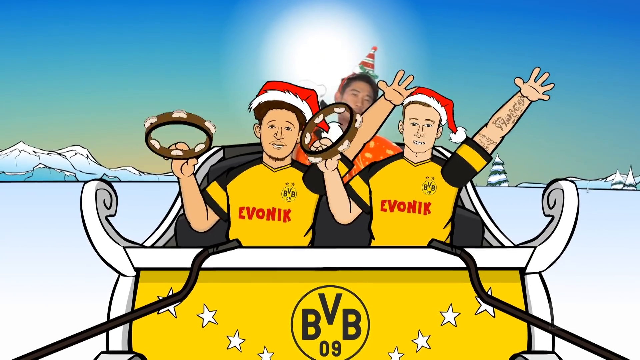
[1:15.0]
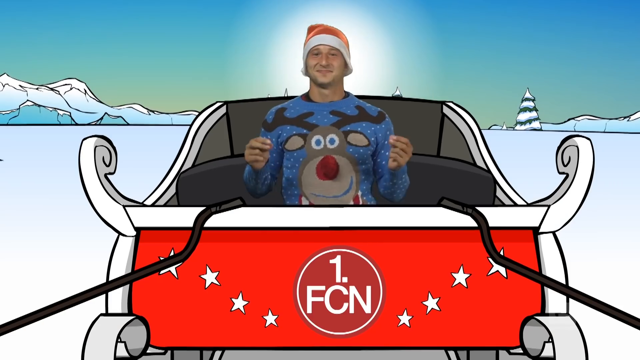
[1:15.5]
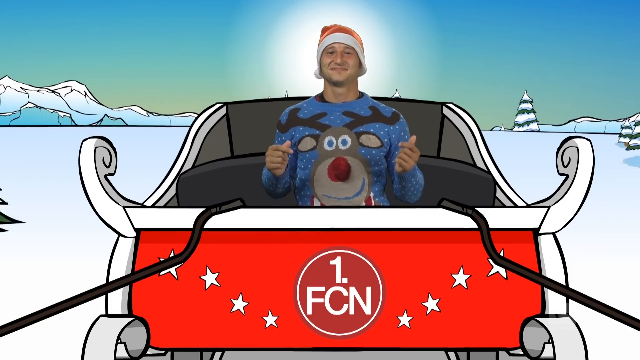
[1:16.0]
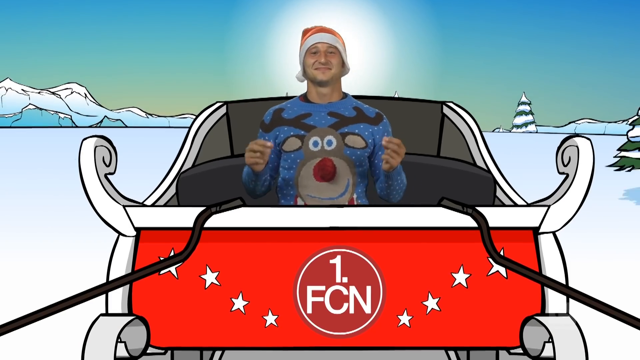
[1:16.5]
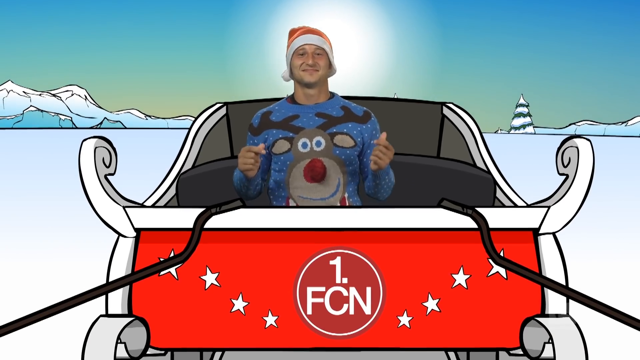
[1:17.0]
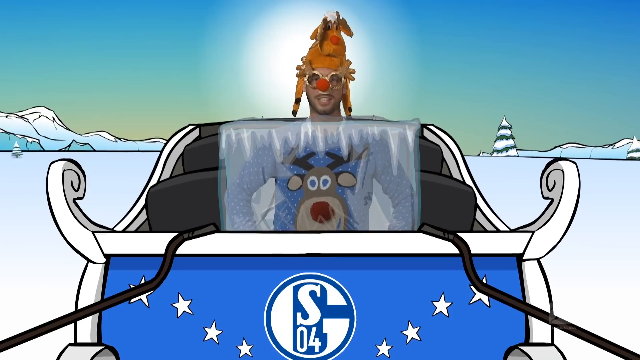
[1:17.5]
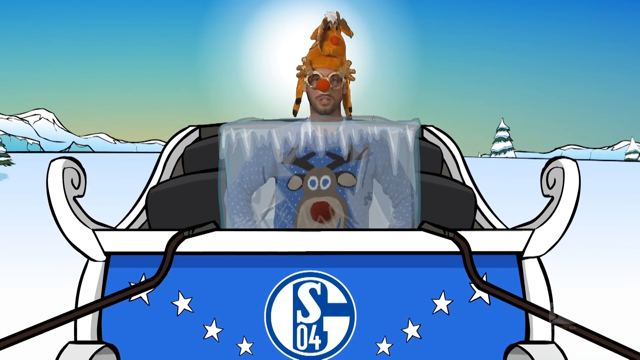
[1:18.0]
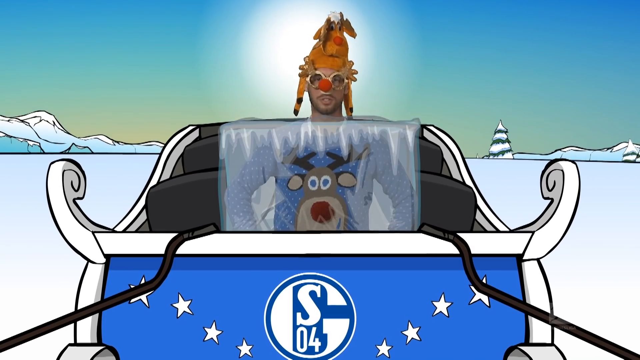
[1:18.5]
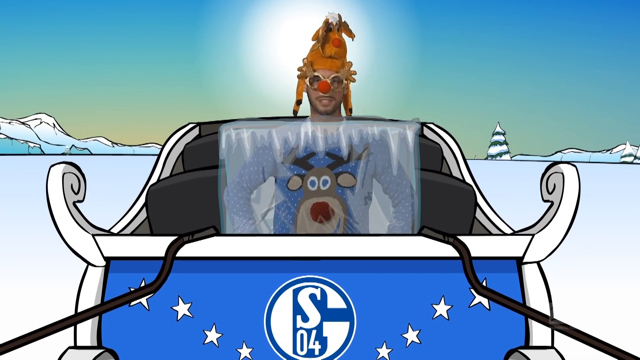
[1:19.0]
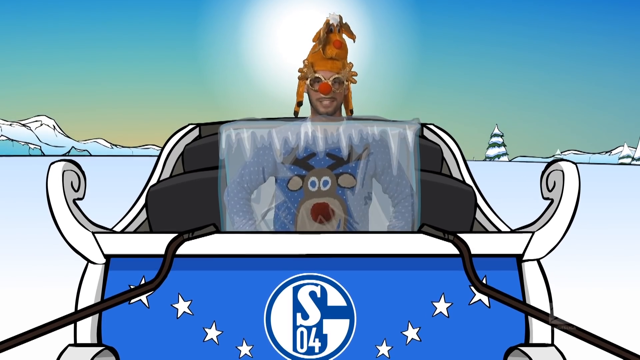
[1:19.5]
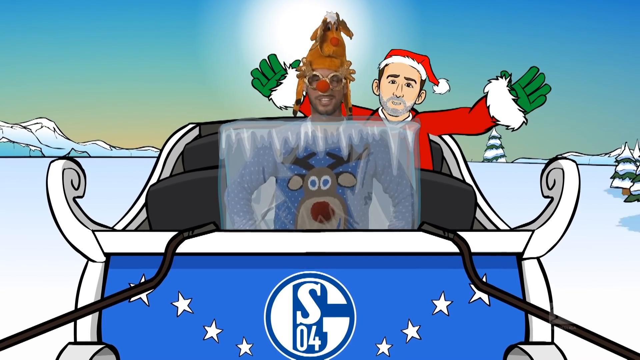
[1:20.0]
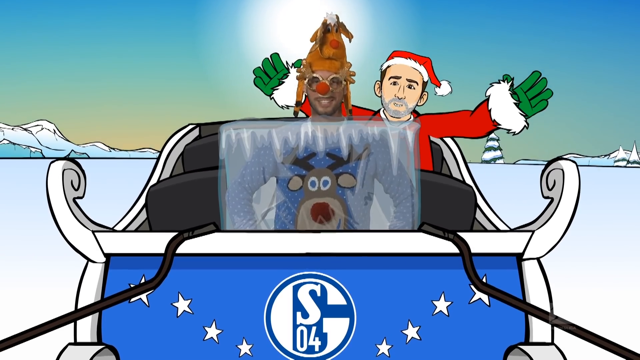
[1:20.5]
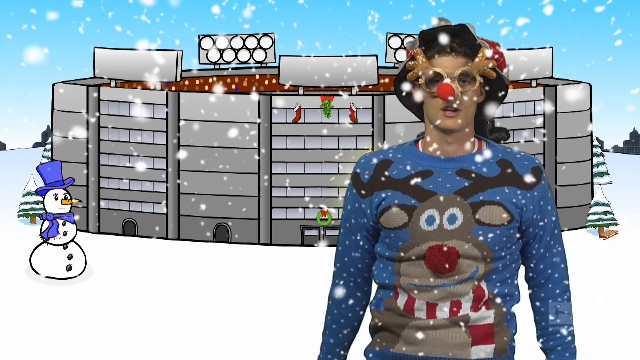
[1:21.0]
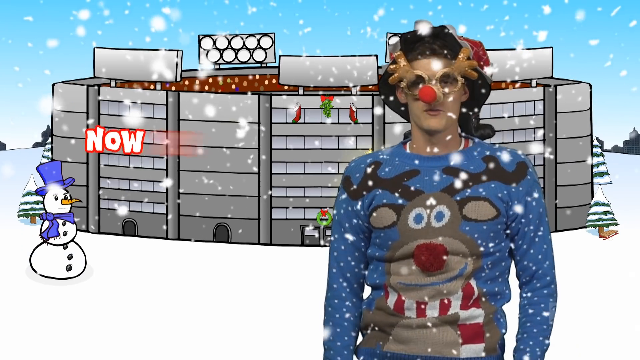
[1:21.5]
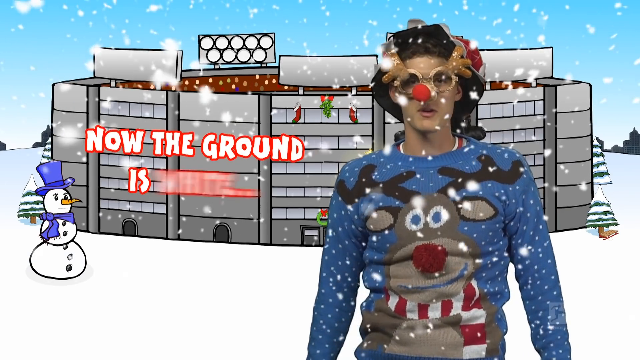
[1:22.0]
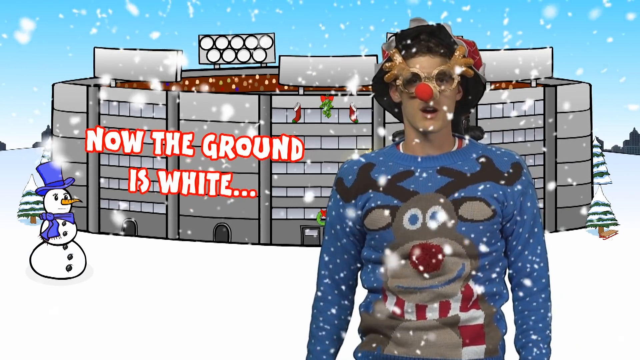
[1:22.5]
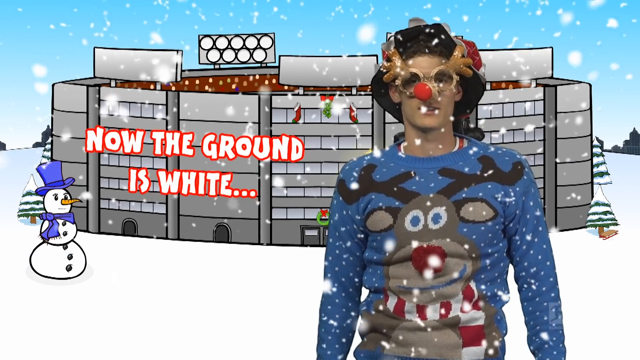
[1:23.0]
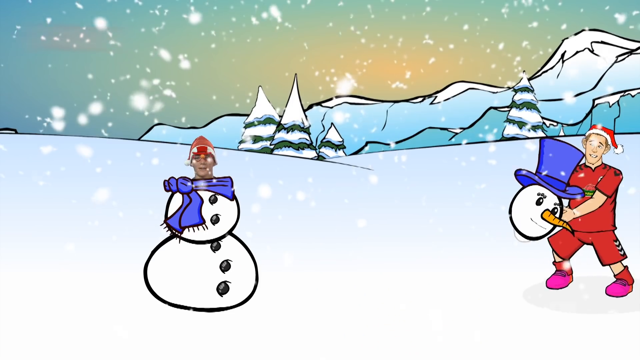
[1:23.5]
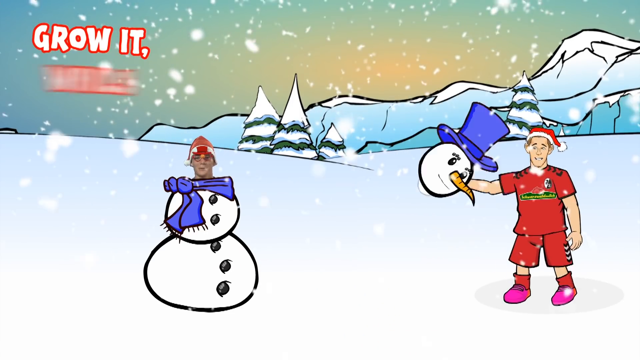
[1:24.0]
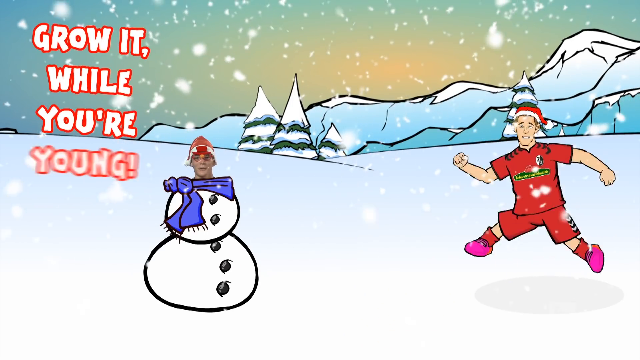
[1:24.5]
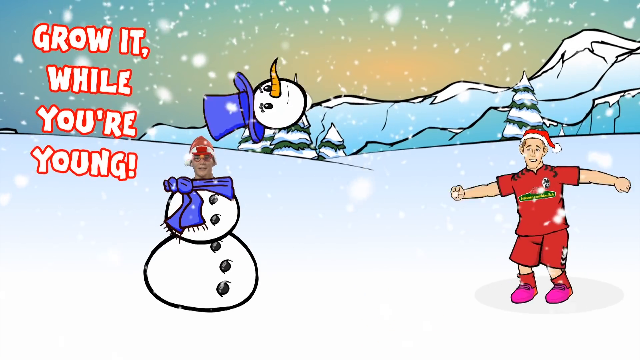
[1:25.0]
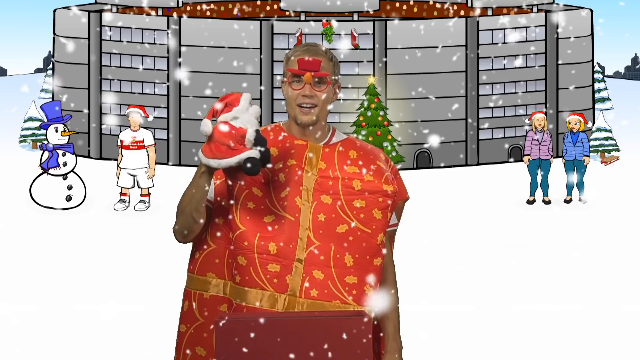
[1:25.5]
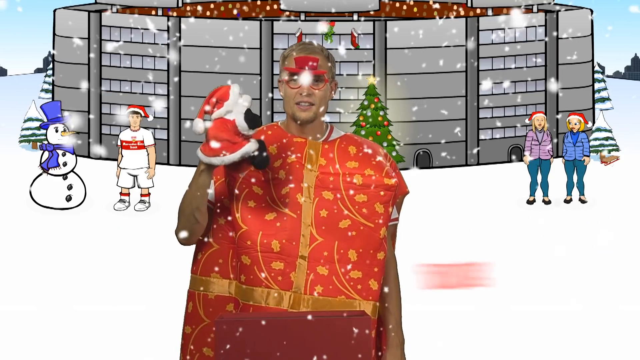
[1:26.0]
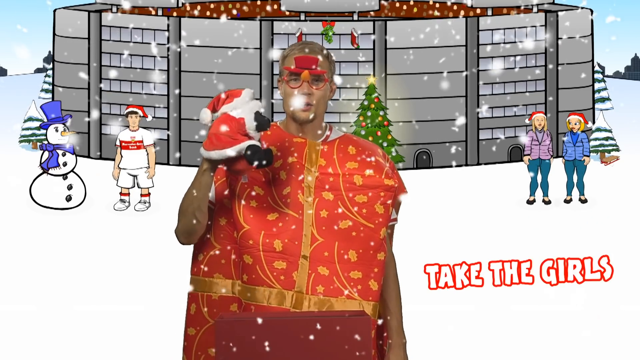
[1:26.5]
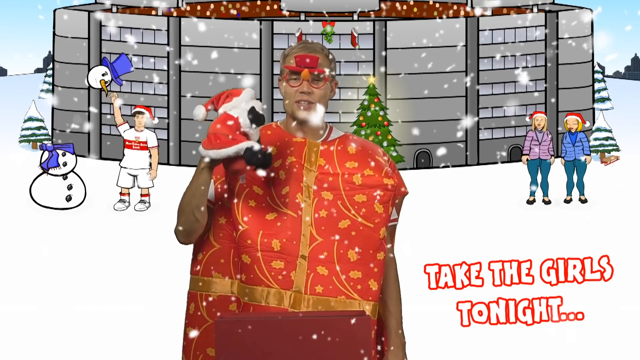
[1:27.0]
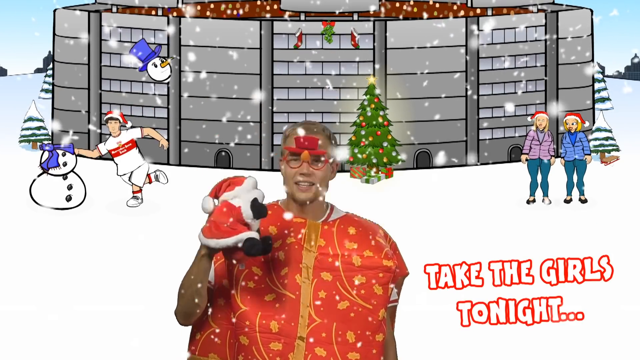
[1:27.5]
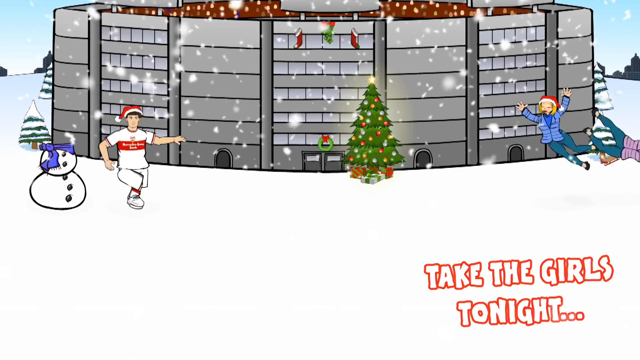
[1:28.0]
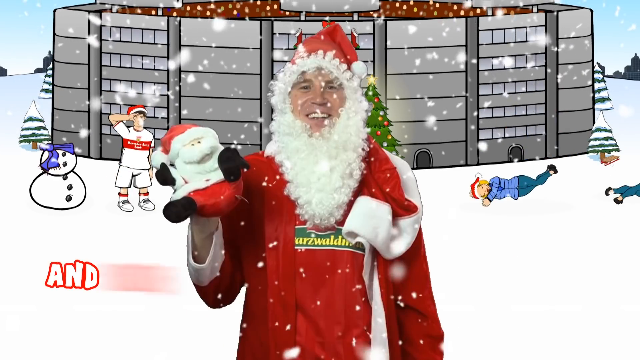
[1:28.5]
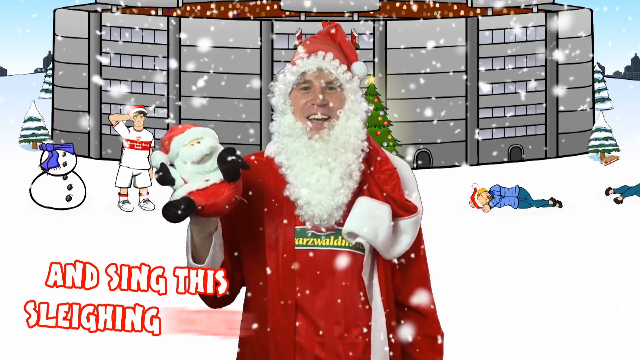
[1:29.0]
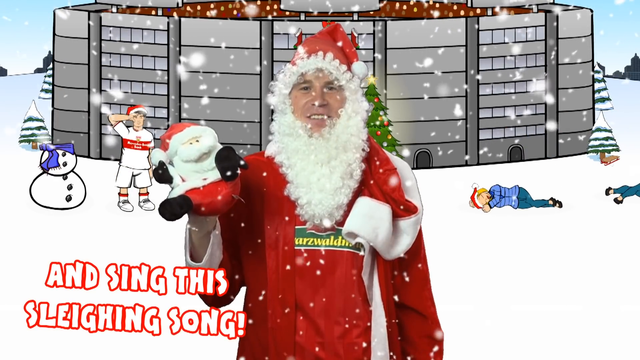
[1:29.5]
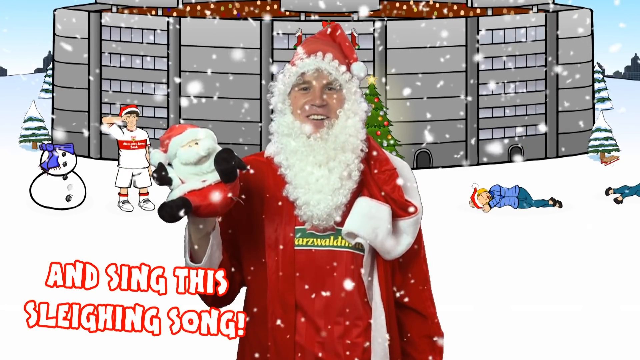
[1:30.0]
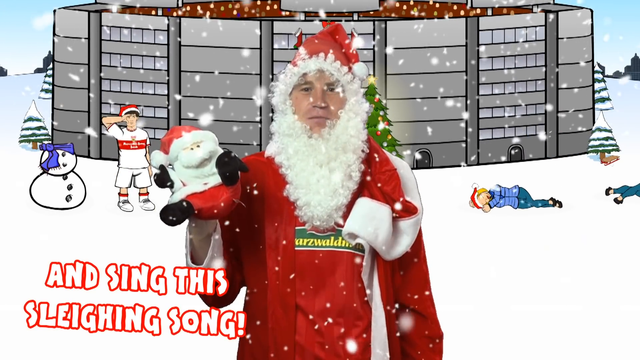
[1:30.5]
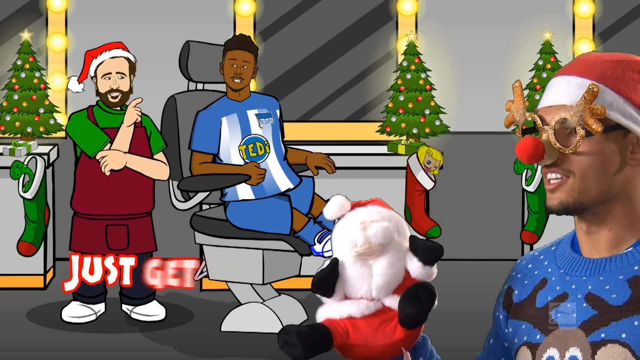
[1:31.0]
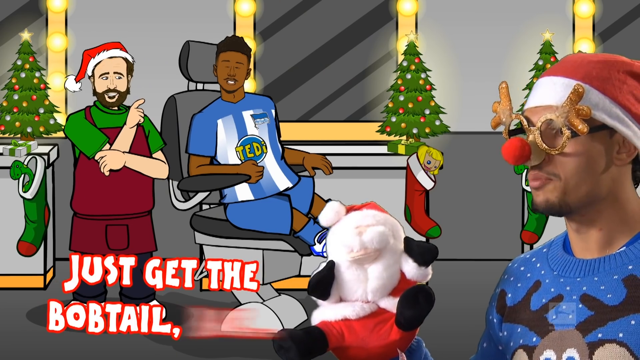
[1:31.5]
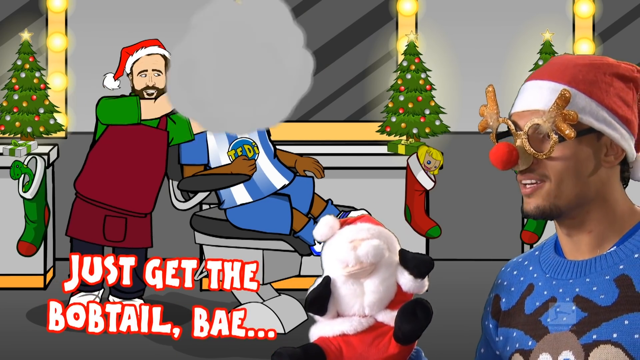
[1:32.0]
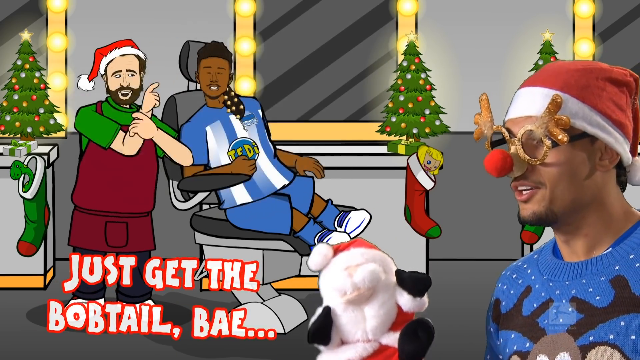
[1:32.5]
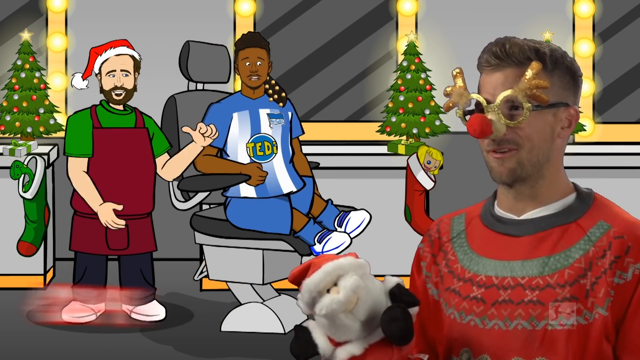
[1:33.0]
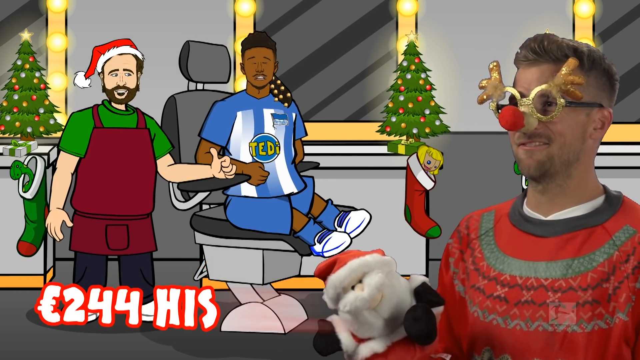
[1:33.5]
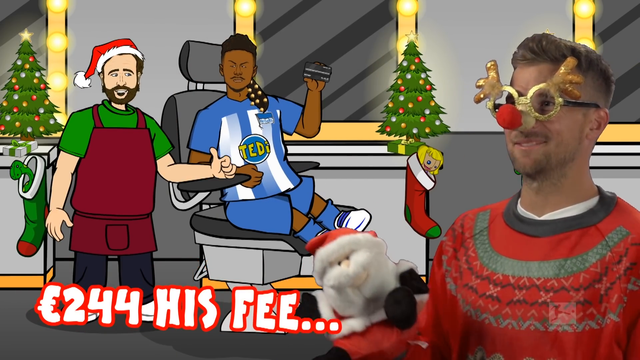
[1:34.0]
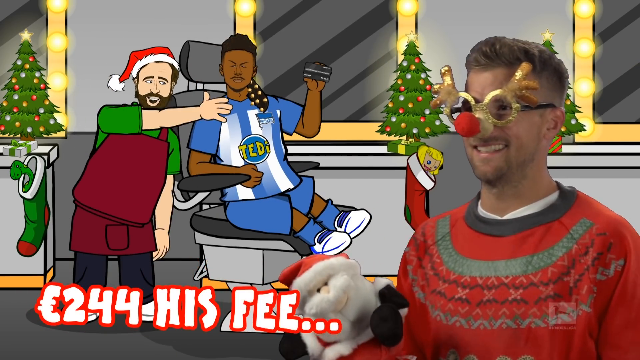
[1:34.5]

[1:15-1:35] A man lip syncs while snapping his fingers, followed by the man in the block of ice. The camera pans to the man in the reindeer sweater with the animated stadium behind him, and the screen reads "Now the ground is white". With the words "While you're young", the snowman's head is kicked up onto the snowman. The words "Take the girls tonight and sing the same song" follow. The barbershop appears with "just get the bobtail bae" and "244, his fee". The yellow sled appears, then the man snapping his fingers.